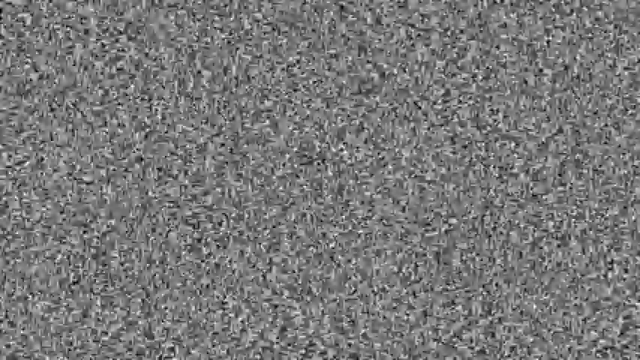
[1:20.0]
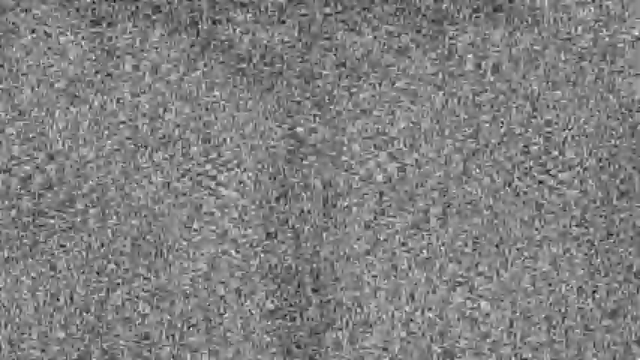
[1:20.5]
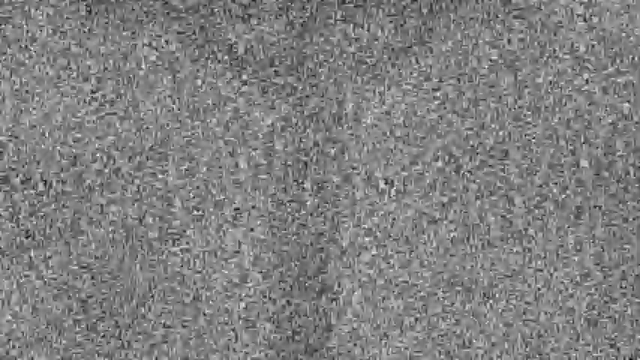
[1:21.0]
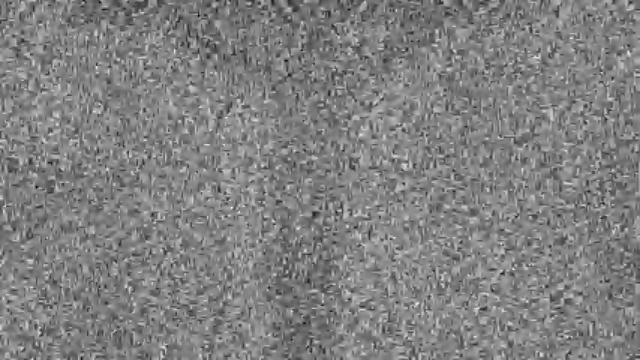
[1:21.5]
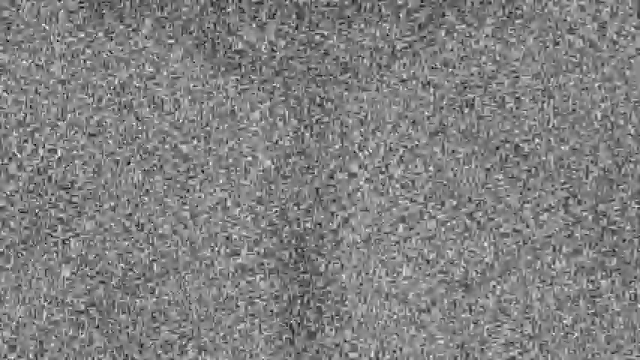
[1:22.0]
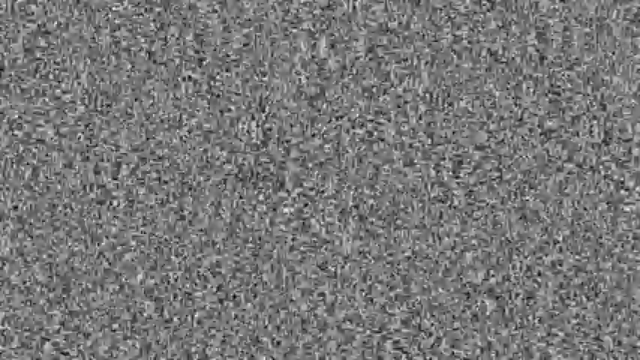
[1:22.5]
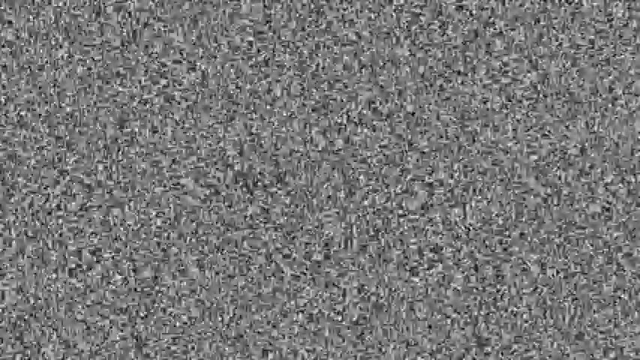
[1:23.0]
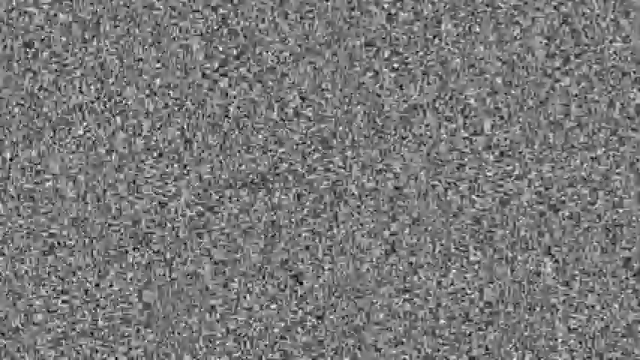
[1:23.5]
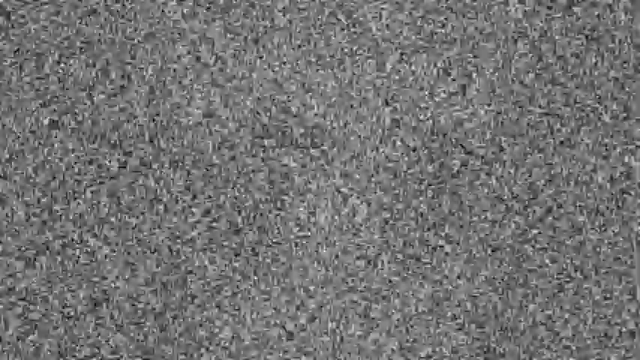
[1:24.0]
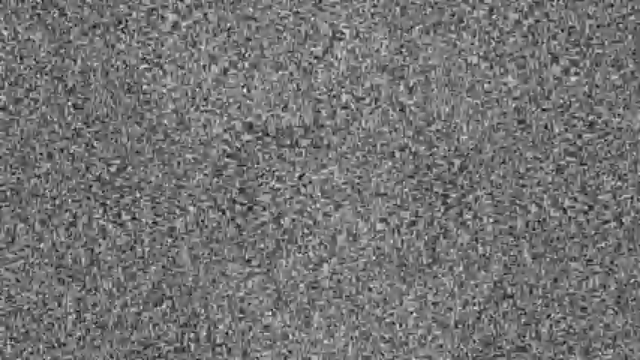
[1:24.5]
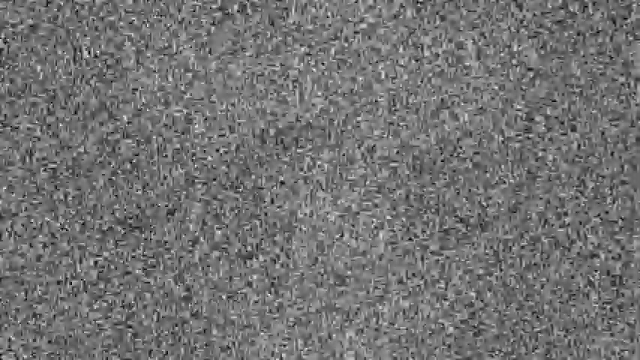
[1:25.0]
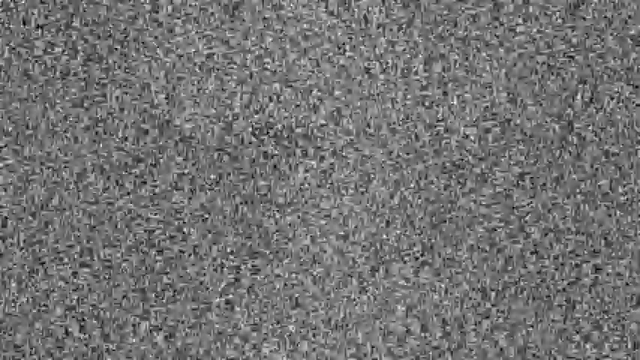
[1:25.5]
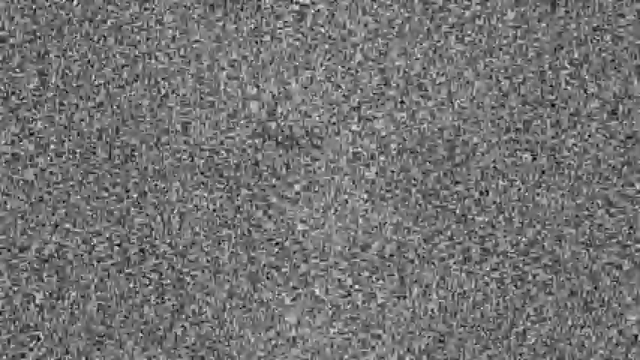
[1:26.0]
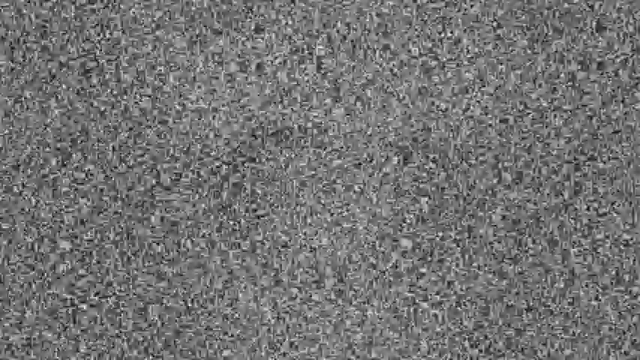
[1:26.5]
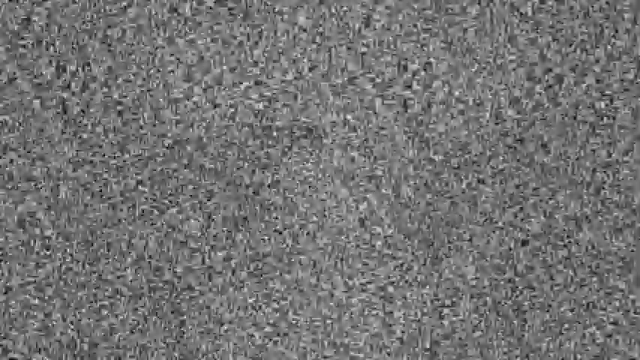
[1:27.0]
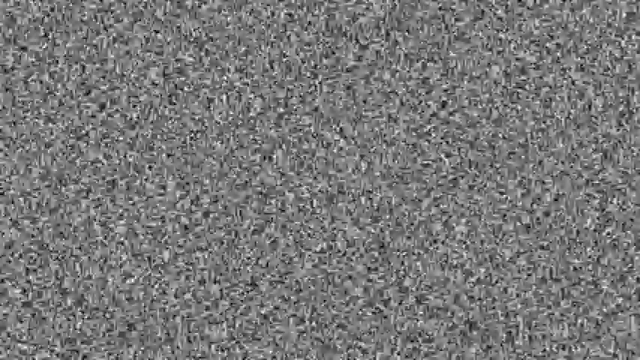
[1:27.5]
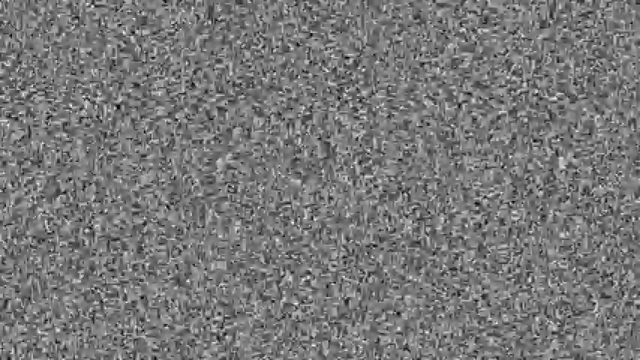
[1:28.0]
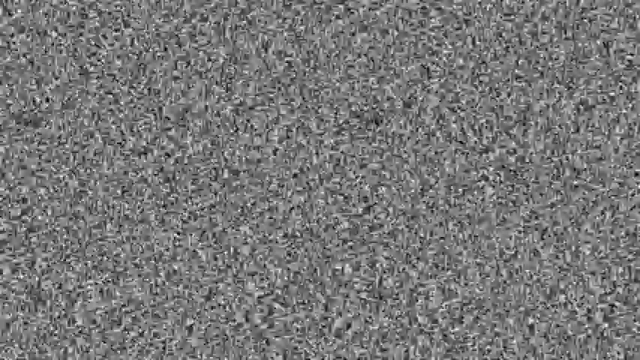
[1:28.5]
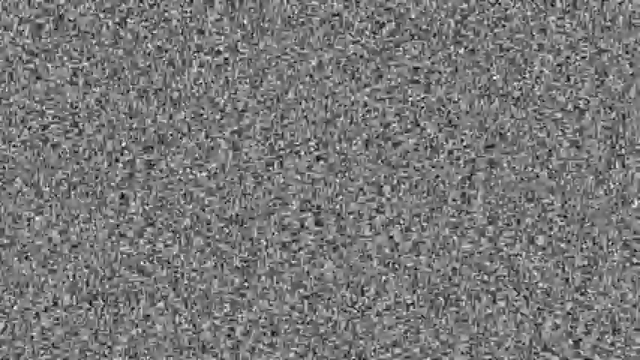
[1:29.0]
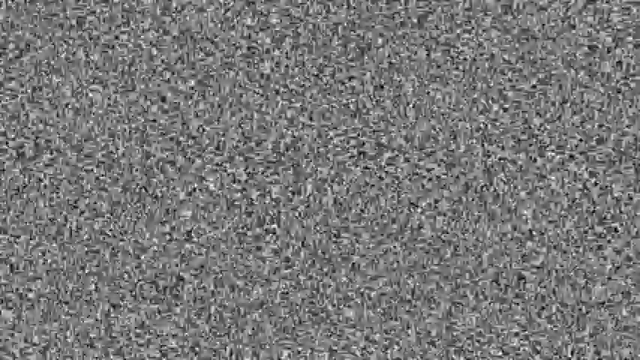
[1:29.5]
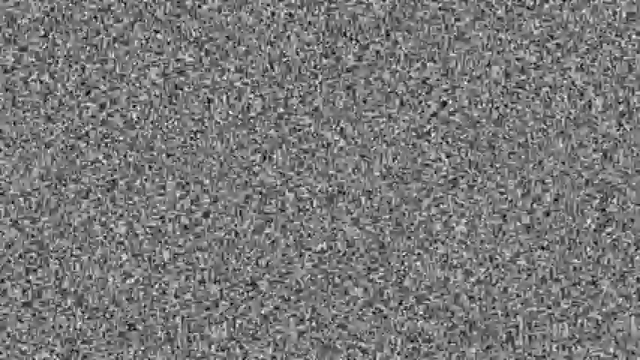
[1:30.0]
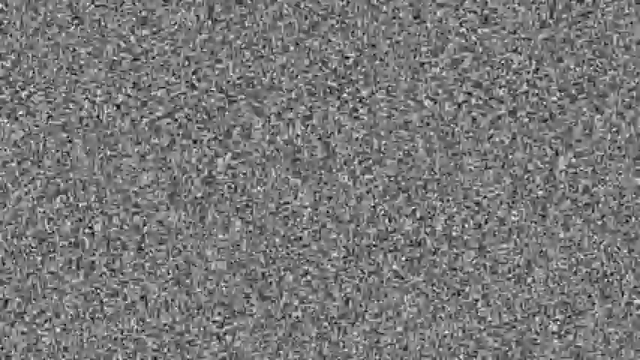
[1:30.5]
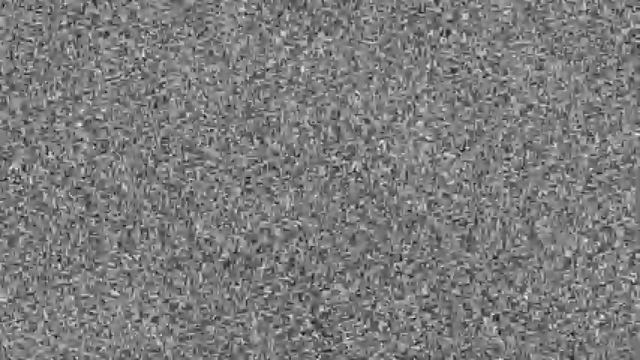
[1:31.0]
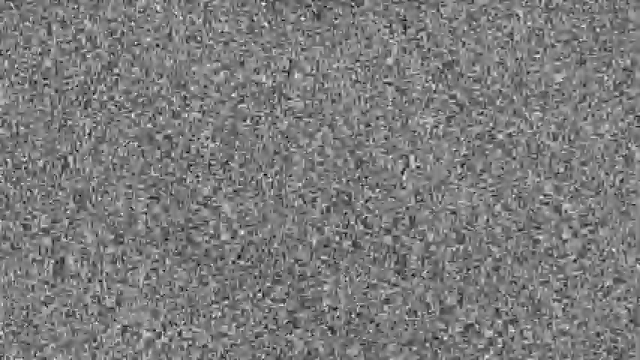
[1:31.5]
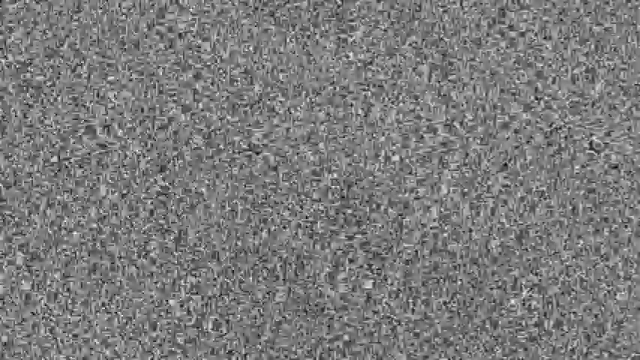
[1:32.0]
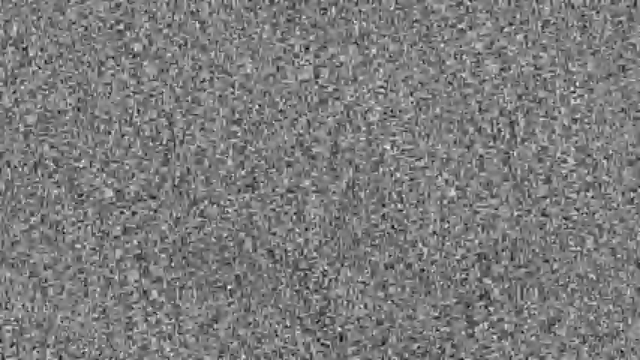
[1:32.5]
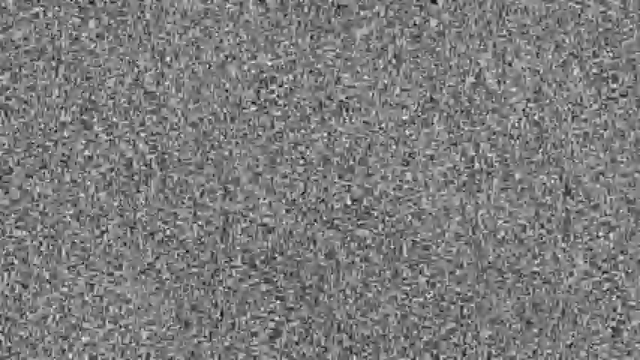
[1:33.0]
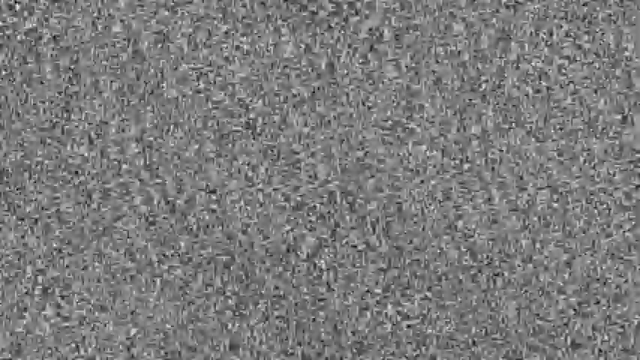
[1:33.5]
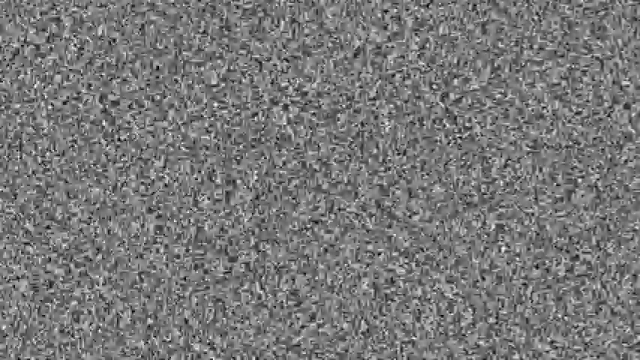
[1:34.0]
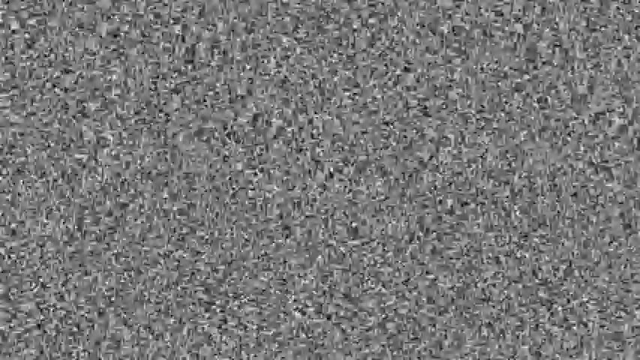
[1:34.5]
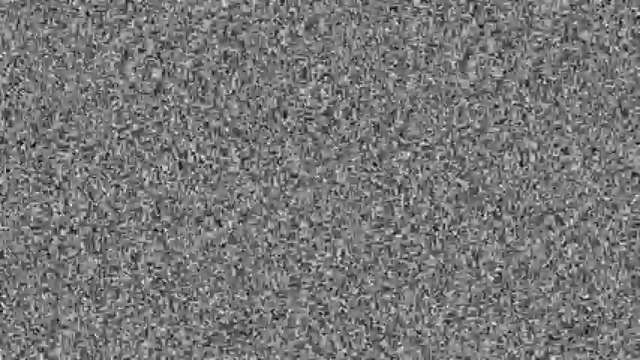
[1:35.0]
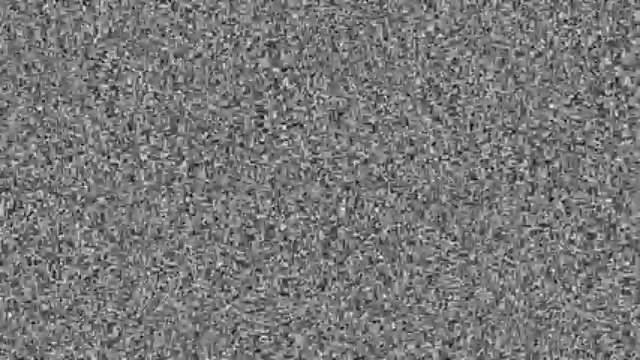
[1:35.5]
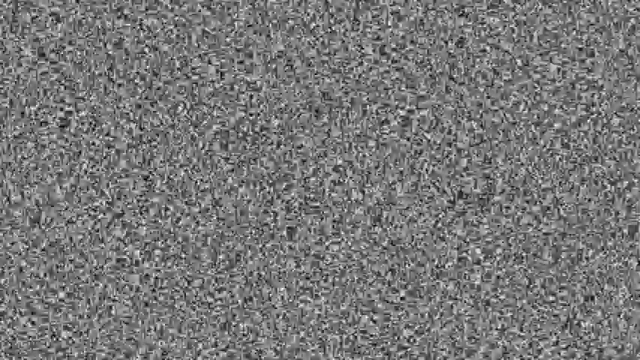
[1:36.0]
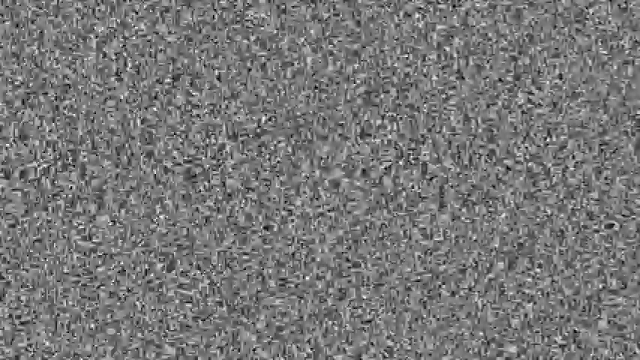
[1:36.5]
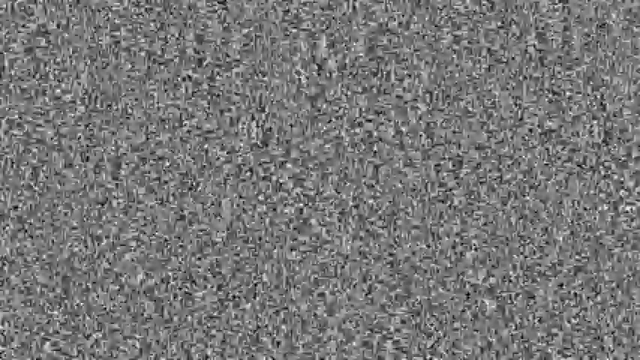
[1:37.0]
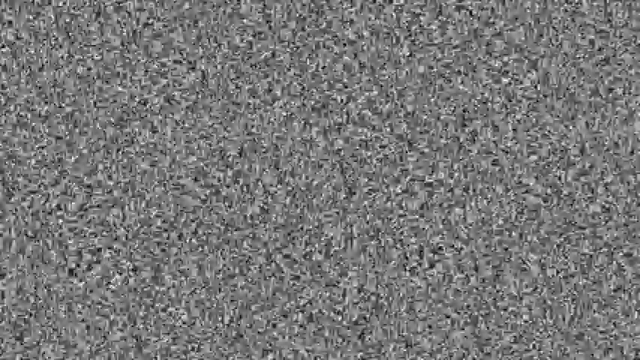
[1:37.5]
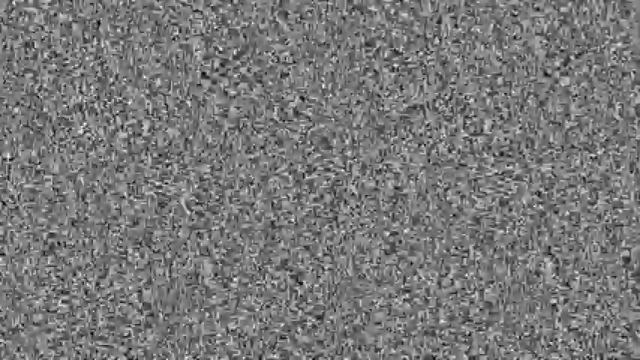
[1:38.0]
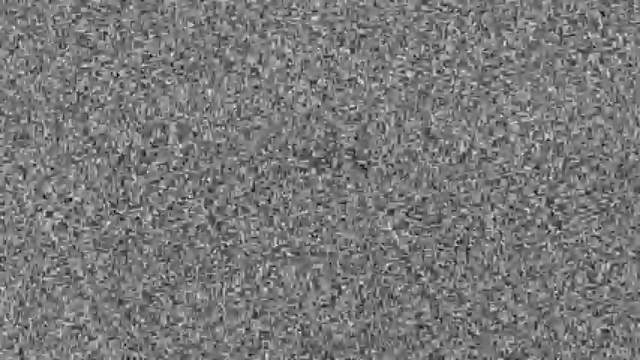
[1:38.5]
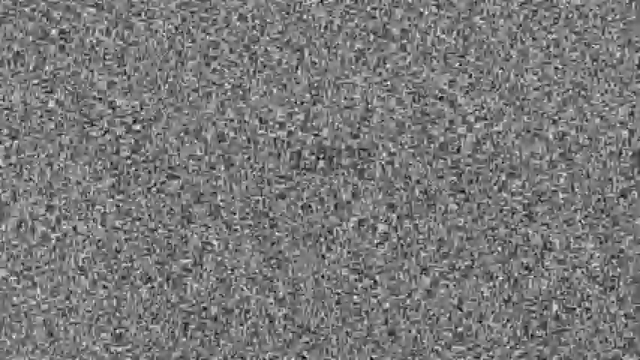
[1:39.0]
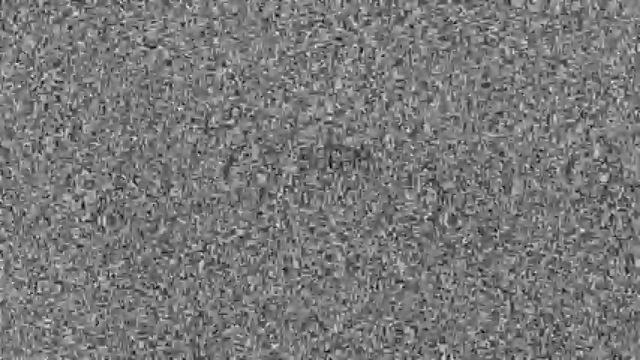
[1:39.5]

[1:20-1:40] Static continues. At first there appears to be the image of a cross-like tree, then numbers appear that seem to fluctuate from one row to another, one set low and the other seemingly higher, as if being shuffled around; the first two numbers are four and four. The intensity of the static fluctuates back and forth, some of it denser than the rest. More numbers appear, apparently a nine and a two followed by about three other numbers near the center, and they fade out. A little shadow of what seems to be some type of moth-like character appears and fades out. Some numbers are shown again from a different angle, and the static keeps intensifying and changing, and then stops.